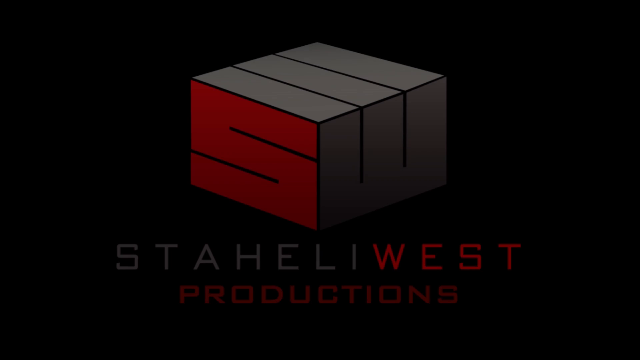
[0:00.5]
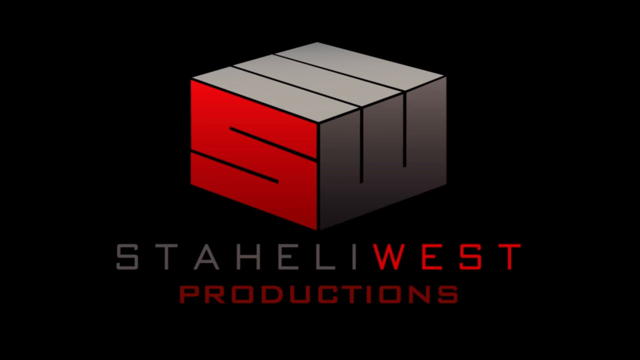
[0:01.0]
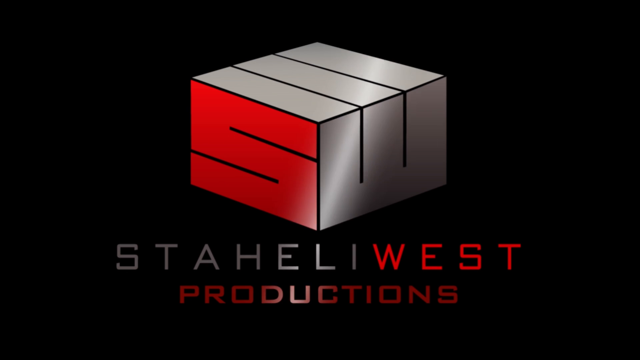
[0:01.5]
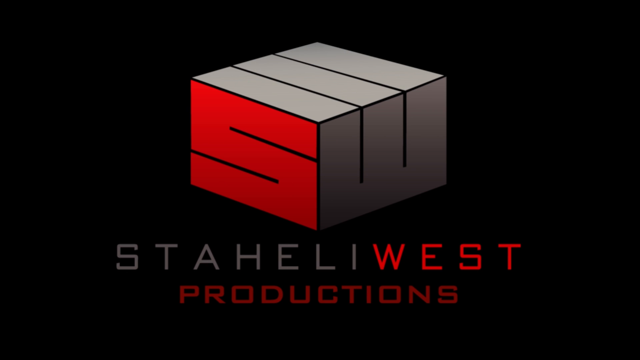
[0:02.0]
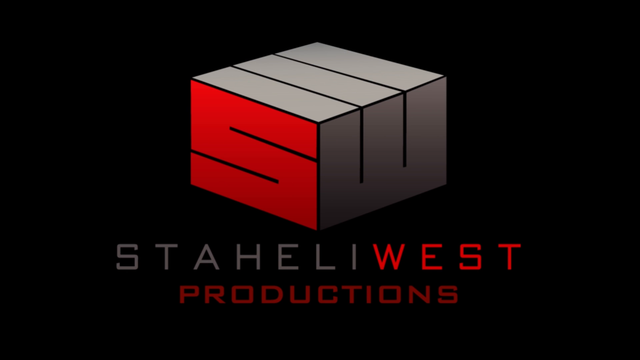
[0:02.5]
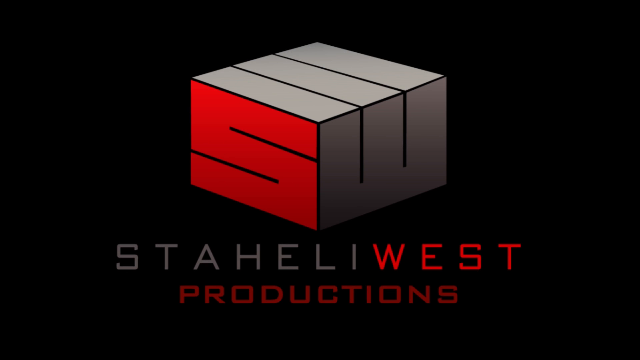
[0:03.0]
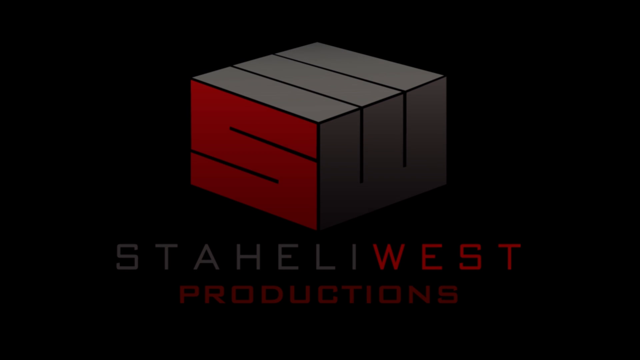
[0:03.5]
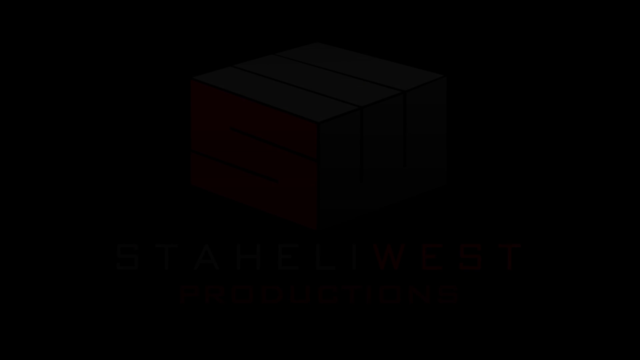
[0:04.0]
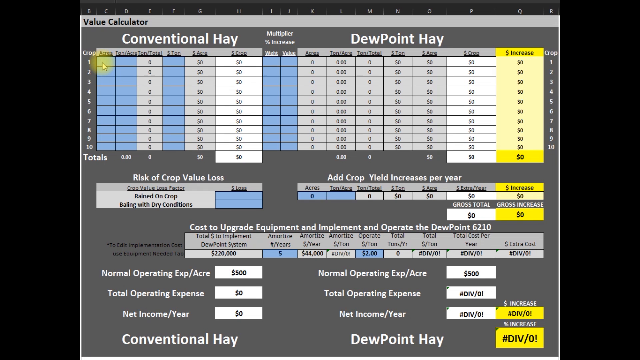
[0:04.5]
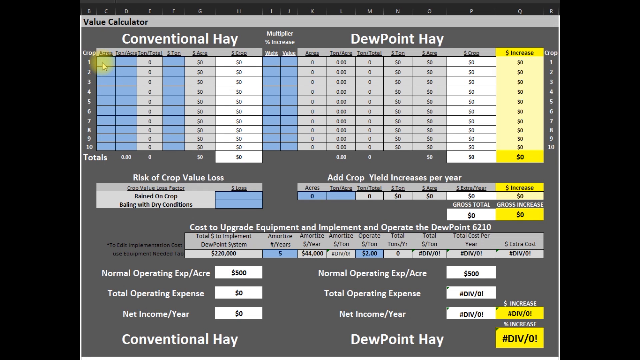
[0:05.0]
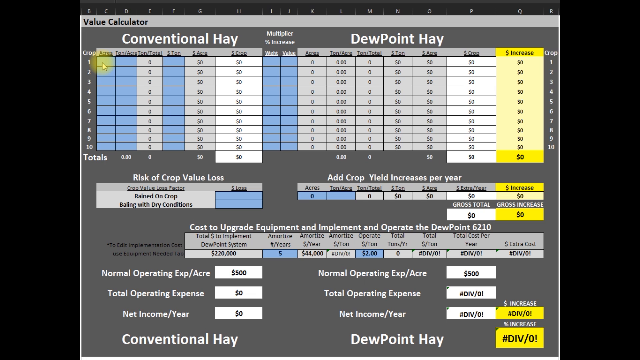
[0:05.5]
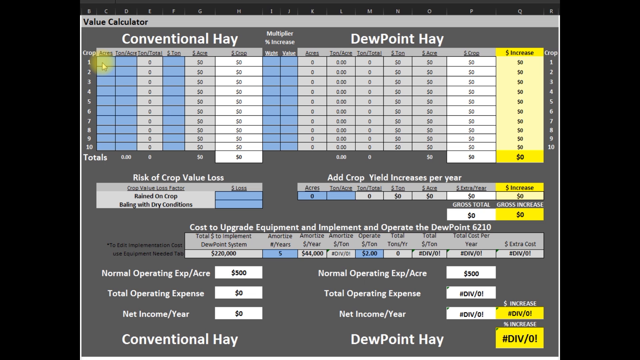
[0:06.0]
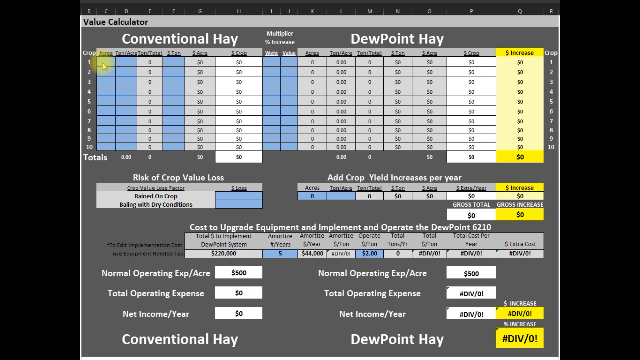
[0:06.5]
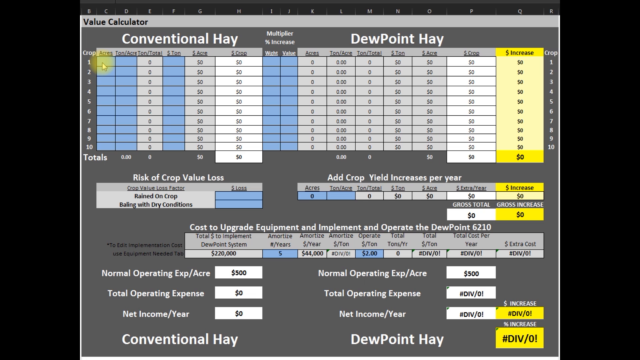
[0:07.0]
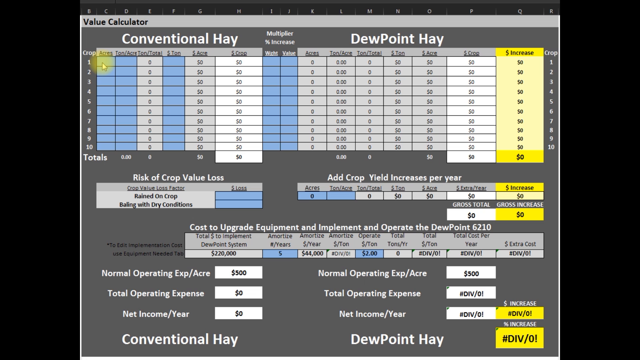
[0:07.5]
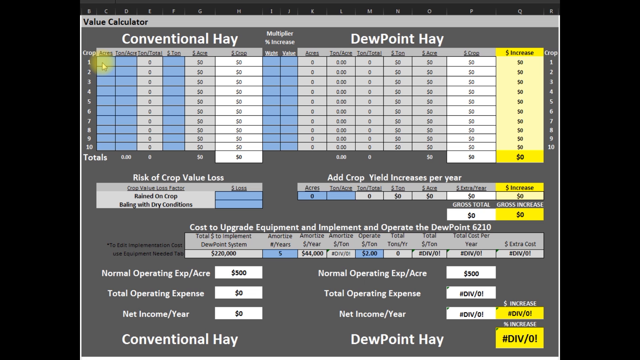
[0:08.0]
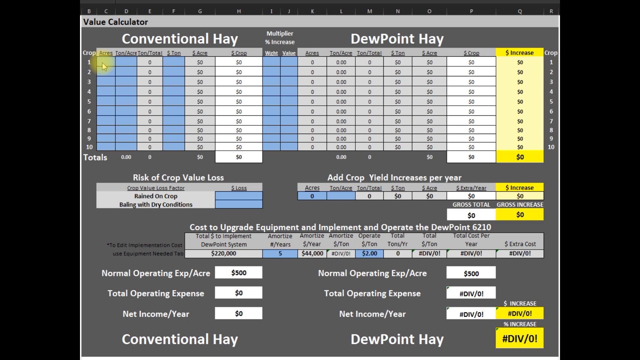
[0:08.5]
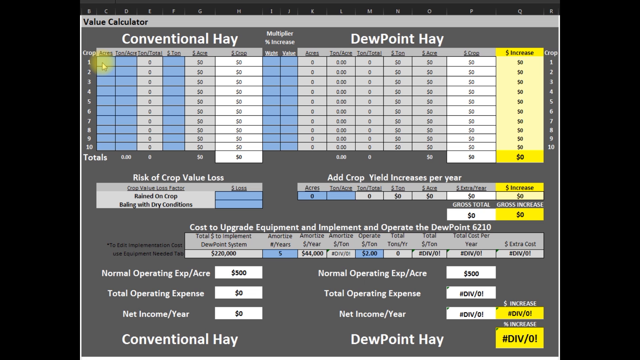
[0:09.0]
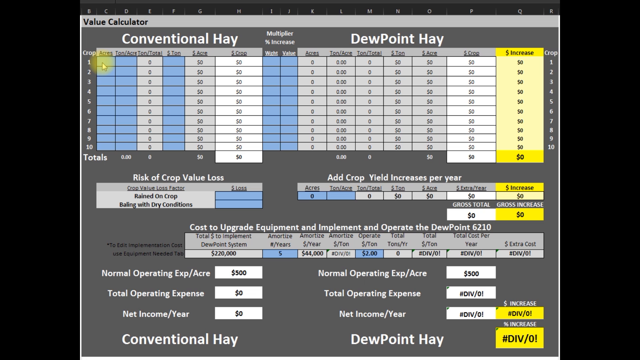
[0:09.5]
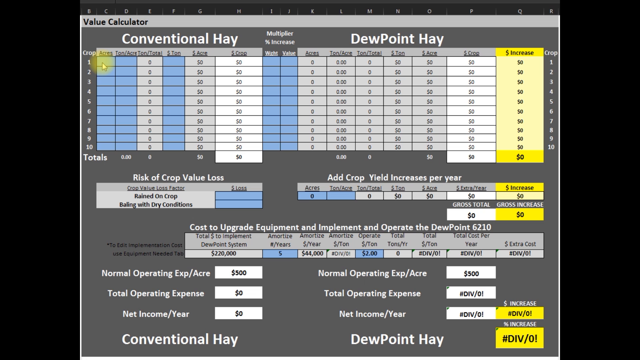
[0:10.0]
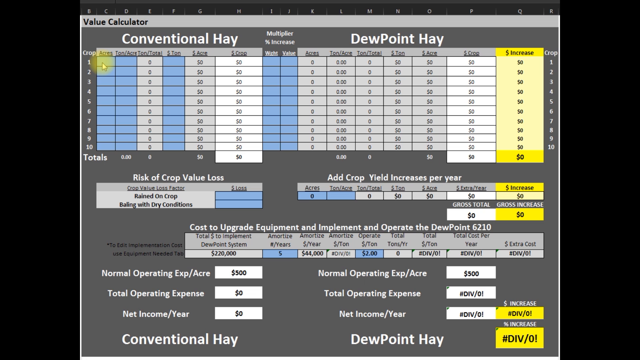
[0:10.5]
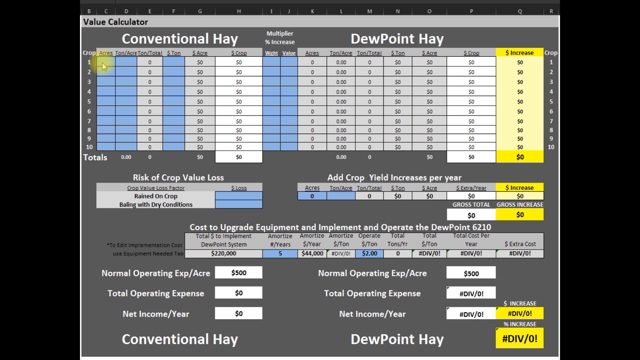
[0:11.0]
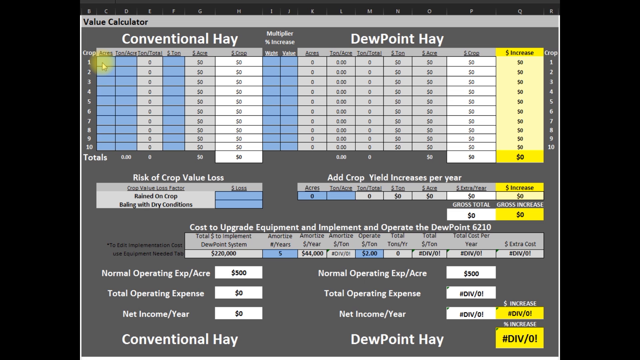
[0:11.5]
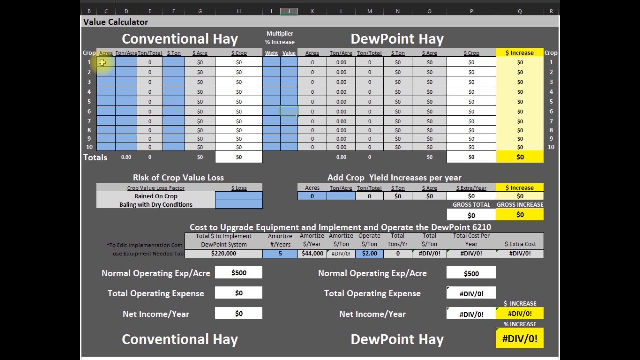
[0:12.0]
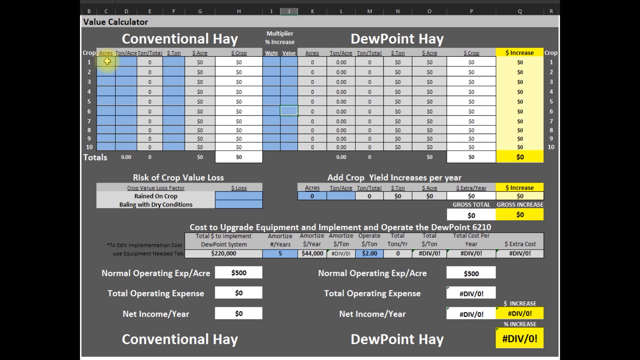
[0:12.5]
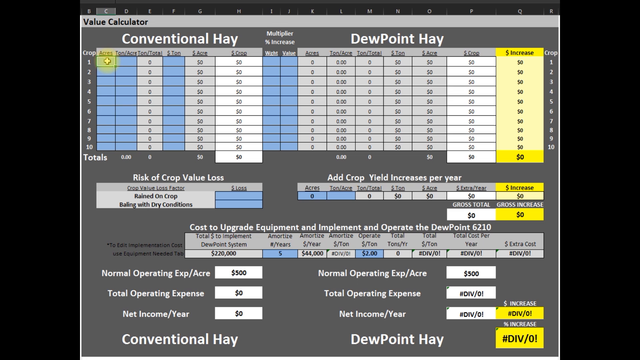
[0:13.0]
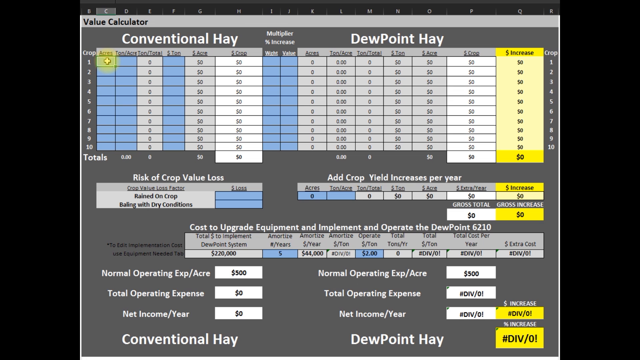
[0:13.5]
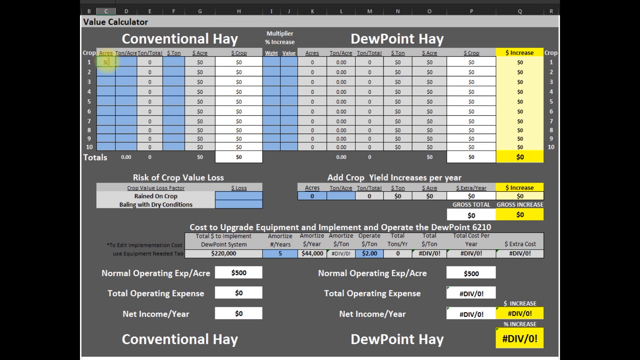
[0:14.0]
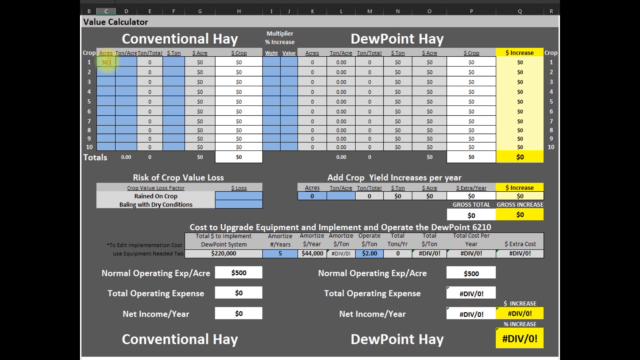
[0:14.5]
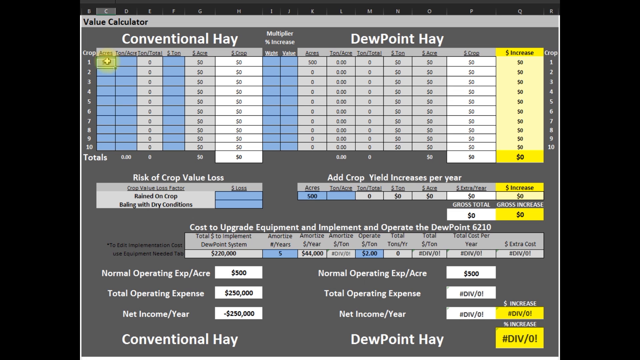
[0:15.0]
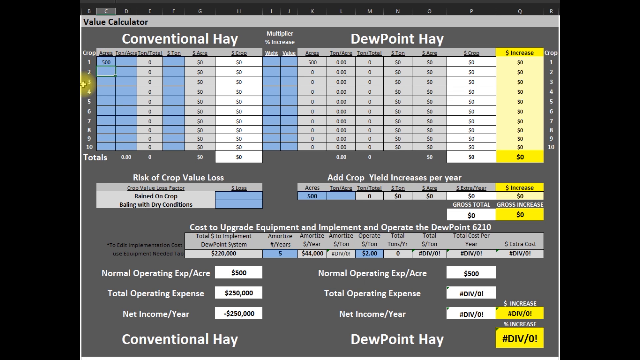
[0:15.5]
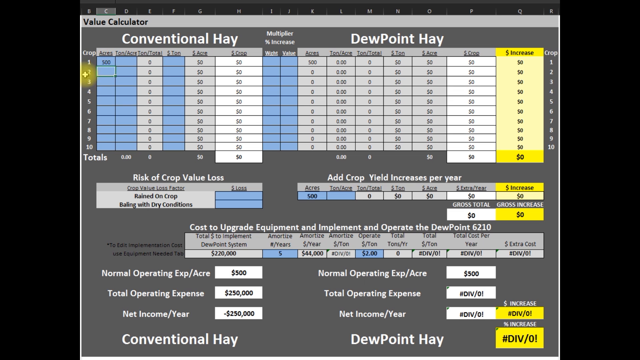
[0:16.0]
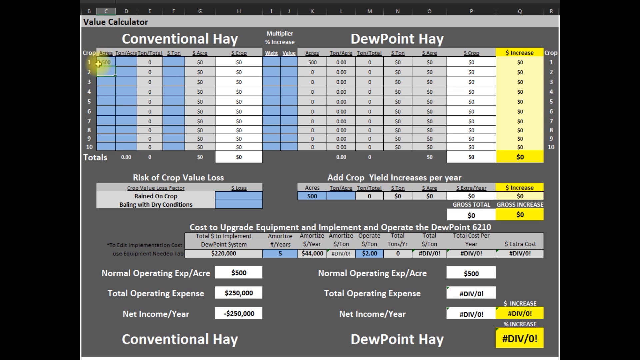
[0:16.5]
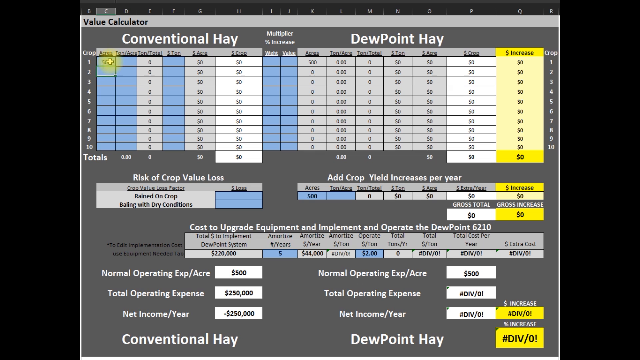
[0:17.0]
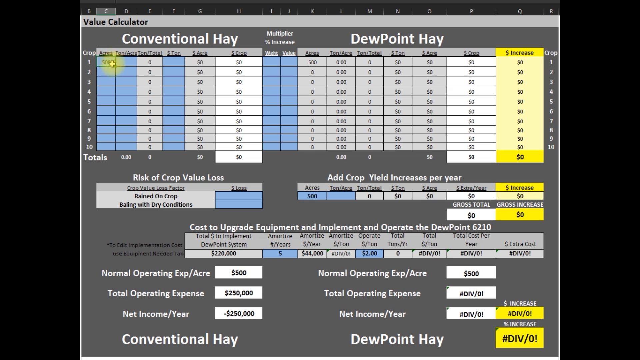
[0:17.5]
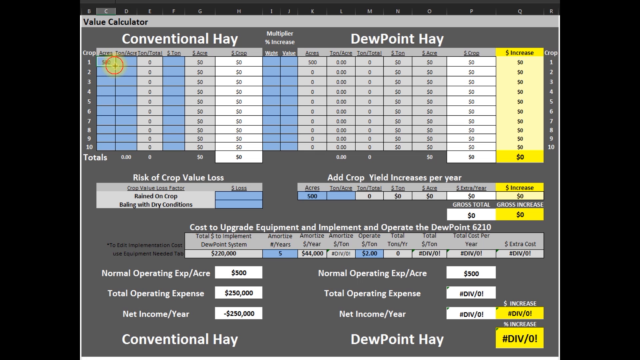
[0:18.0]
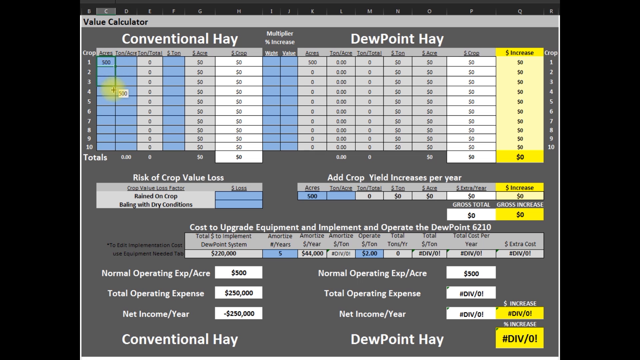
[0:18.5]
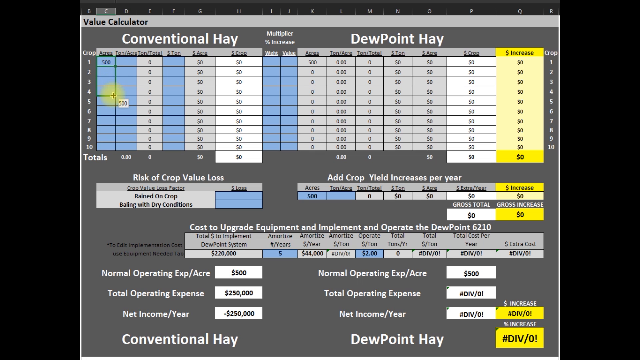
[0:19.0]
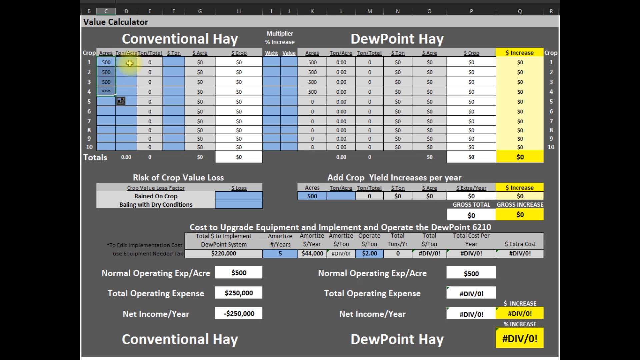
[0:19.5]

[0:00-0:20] The video begins on a black background, and then what appears to be a logo comes up. It looks like an S, which is red, on the left side, though it might be a W. In gray font the name "STAHELI" appears, then "West" in red, and "productions" in red underneath. A pop-up follows, apparently showing someone working on a computer. On the left side, "value calculator" is written in black, and in white there is "conventional hay". On the right side it says "DEW point hay". Whoever is using the mouse appears to click on the first cell under "conventional hay". Some of the cells are white, some are gray and some are blue, and there is also an area with yellow cells, possibly a total; the view gets blurry when zoomed in.